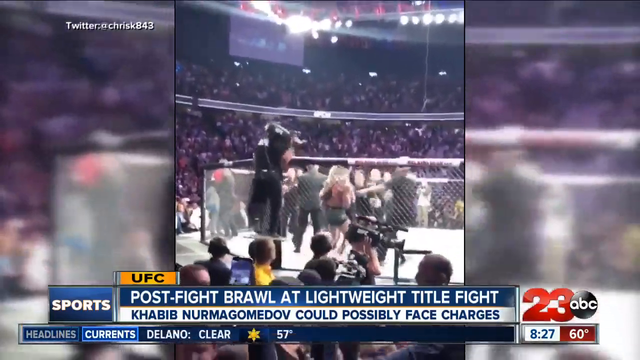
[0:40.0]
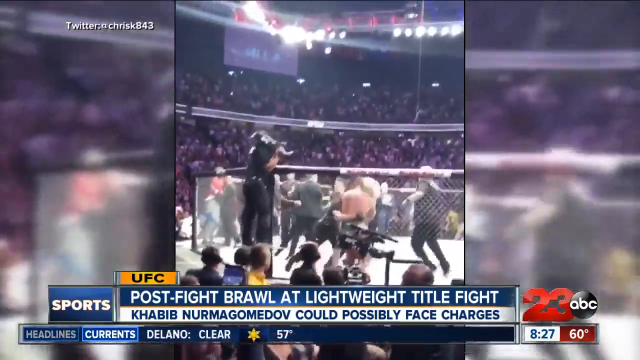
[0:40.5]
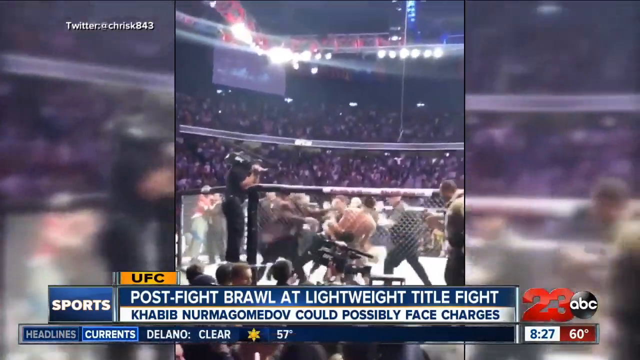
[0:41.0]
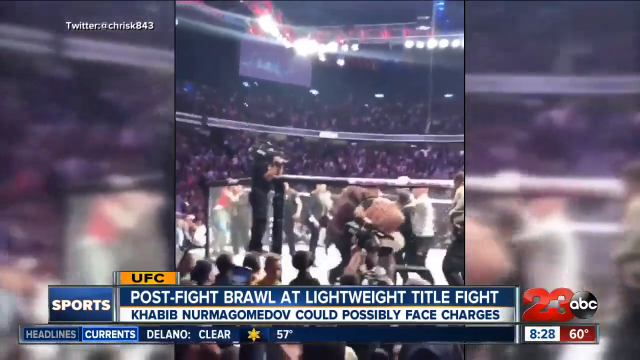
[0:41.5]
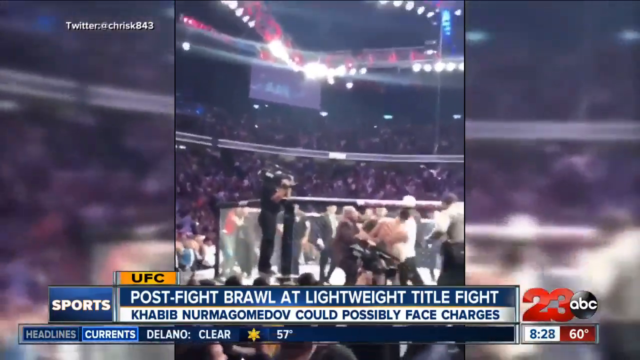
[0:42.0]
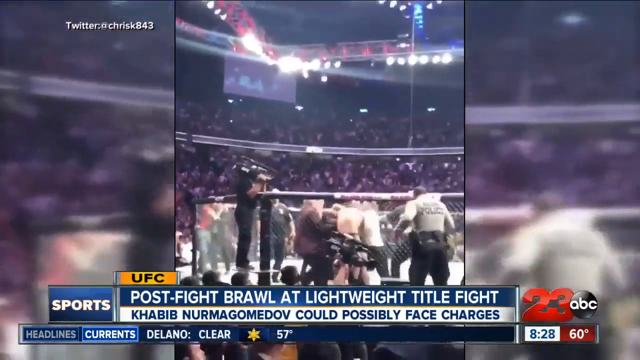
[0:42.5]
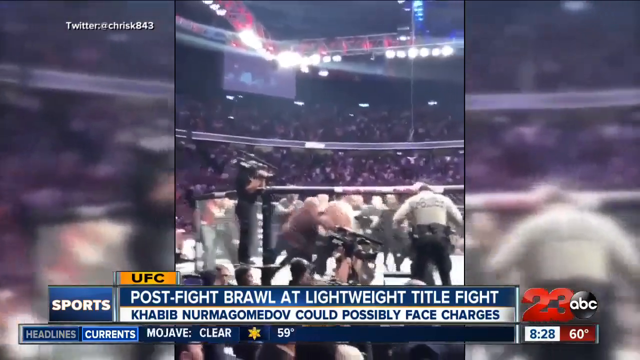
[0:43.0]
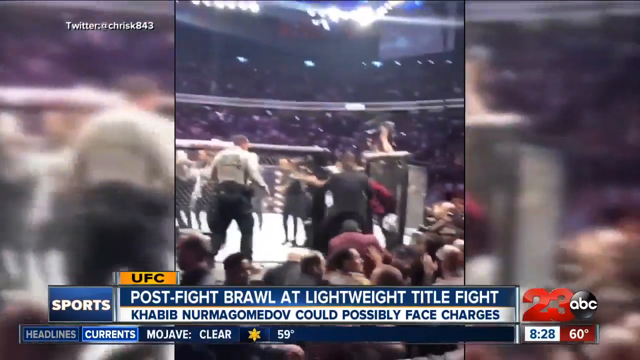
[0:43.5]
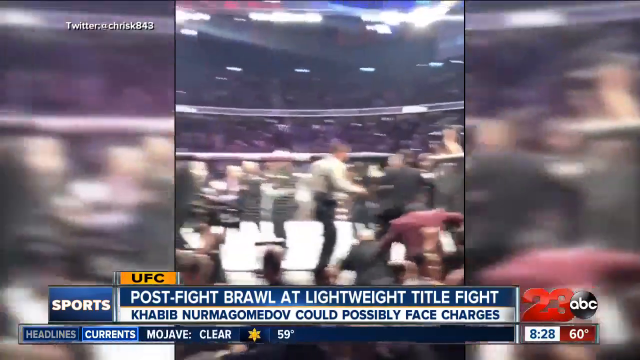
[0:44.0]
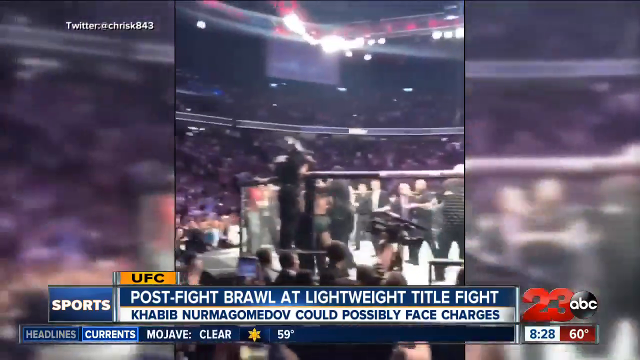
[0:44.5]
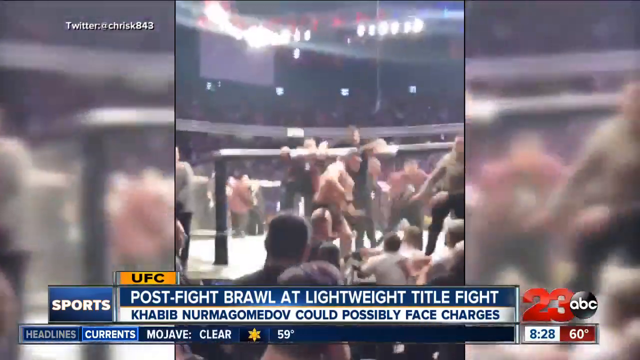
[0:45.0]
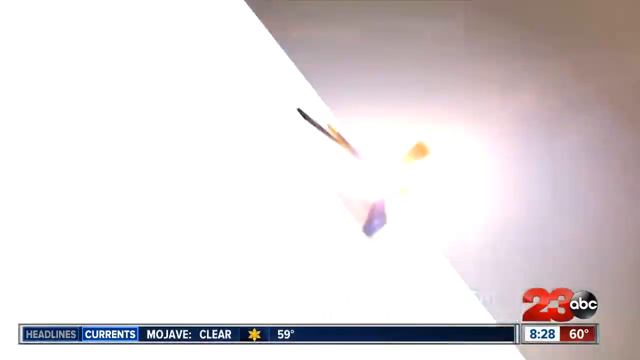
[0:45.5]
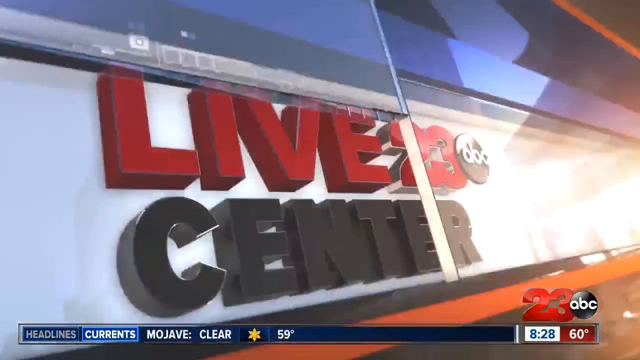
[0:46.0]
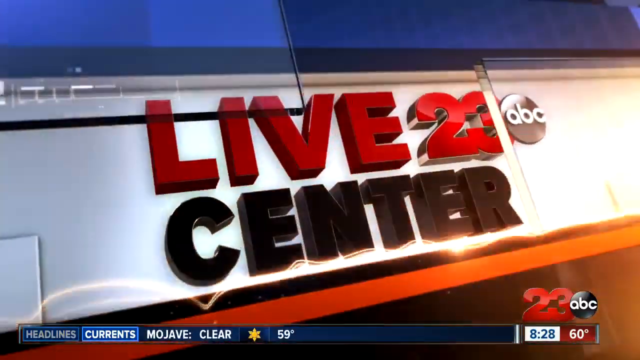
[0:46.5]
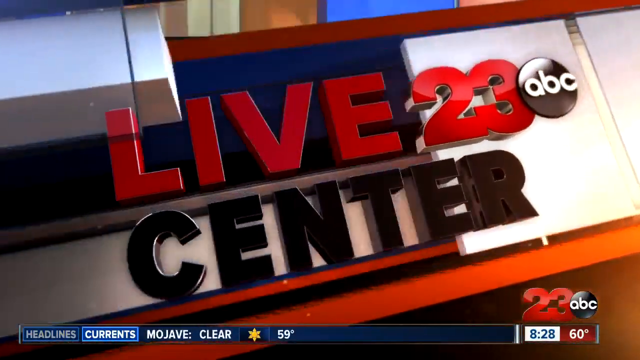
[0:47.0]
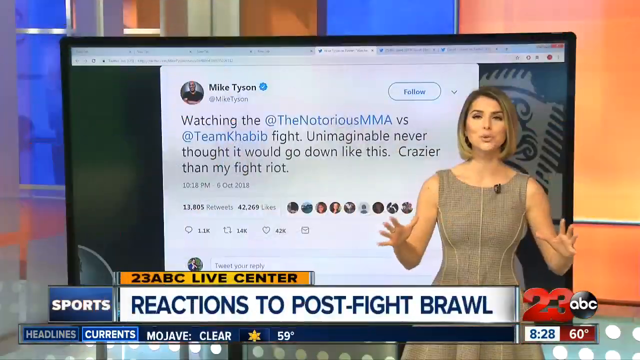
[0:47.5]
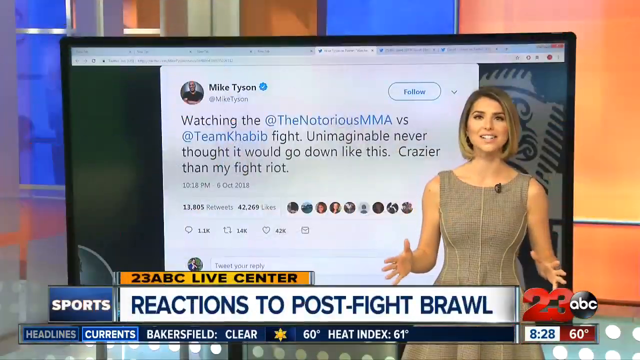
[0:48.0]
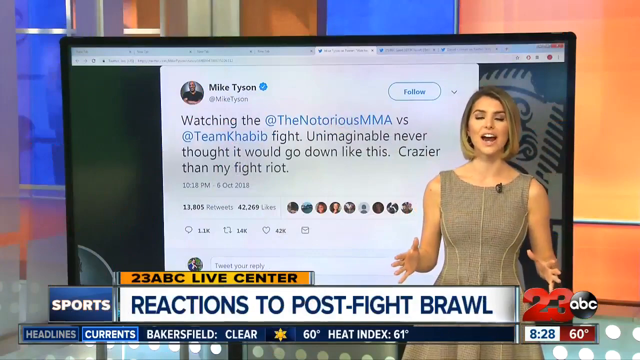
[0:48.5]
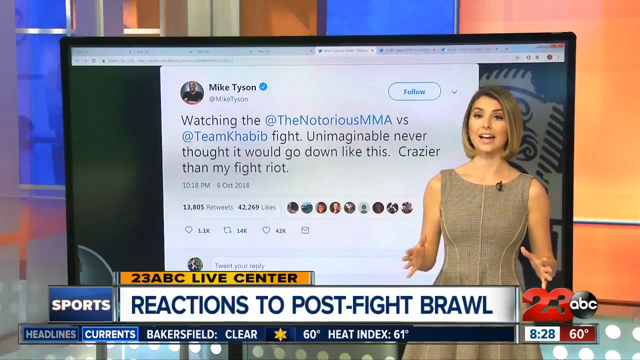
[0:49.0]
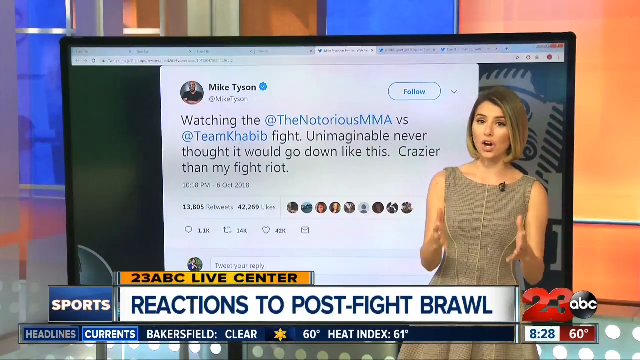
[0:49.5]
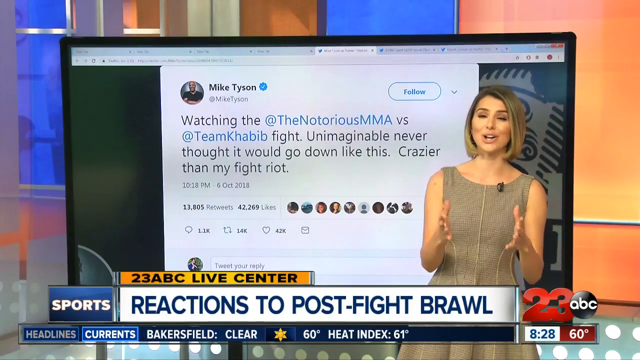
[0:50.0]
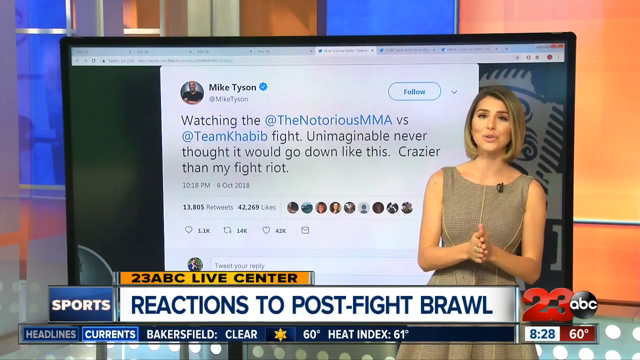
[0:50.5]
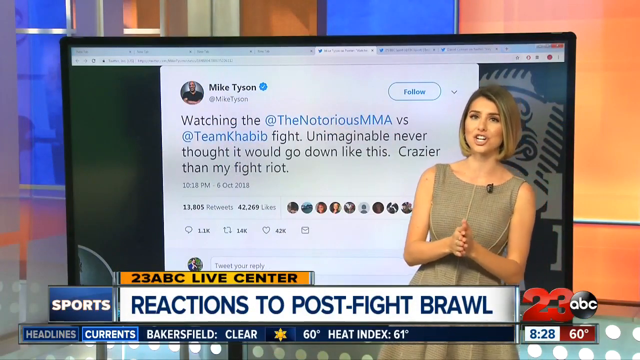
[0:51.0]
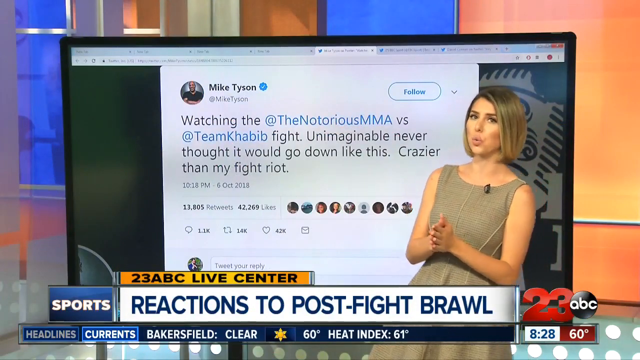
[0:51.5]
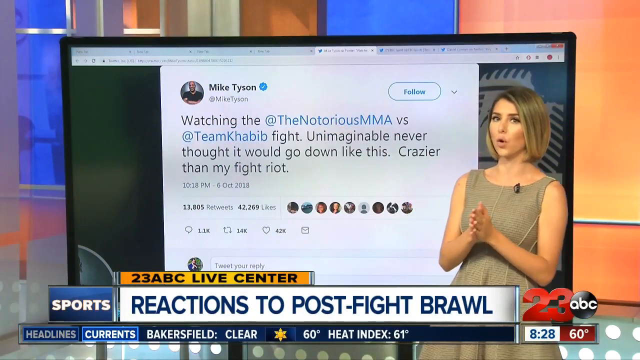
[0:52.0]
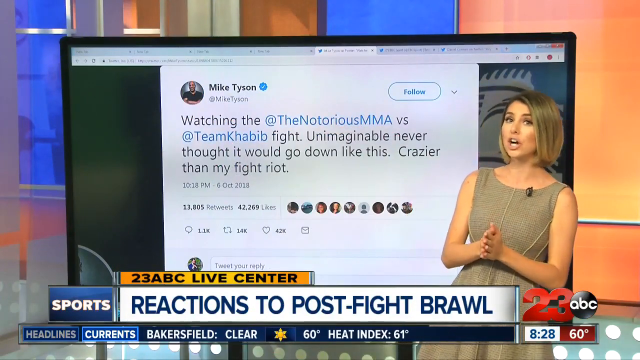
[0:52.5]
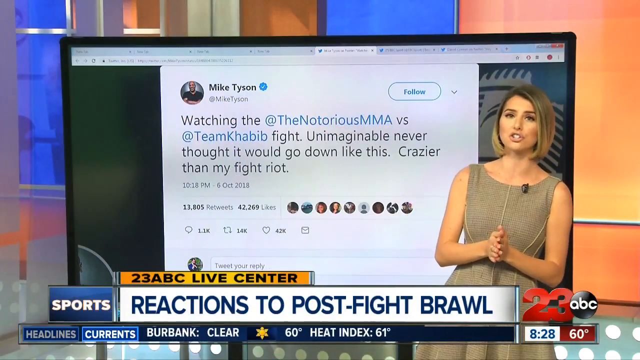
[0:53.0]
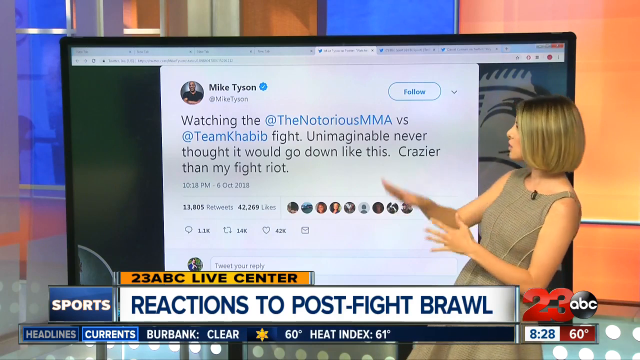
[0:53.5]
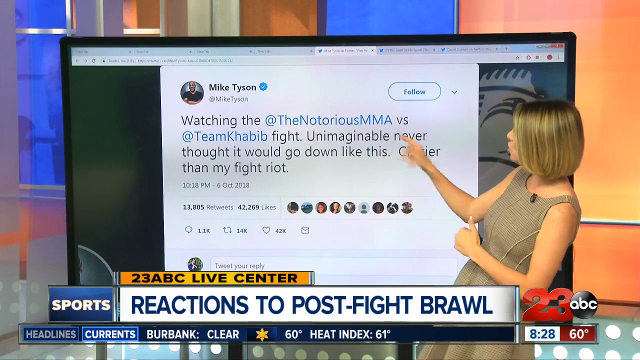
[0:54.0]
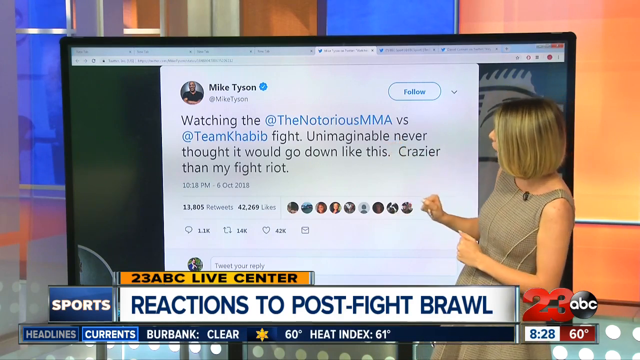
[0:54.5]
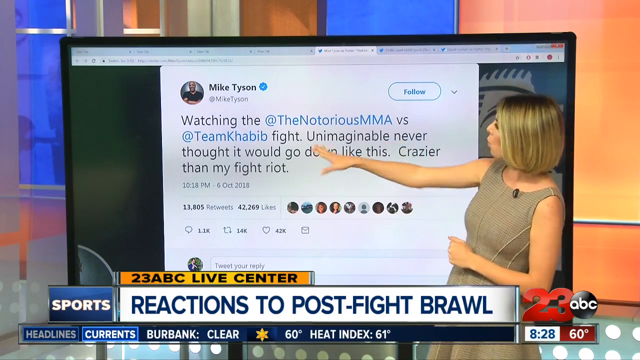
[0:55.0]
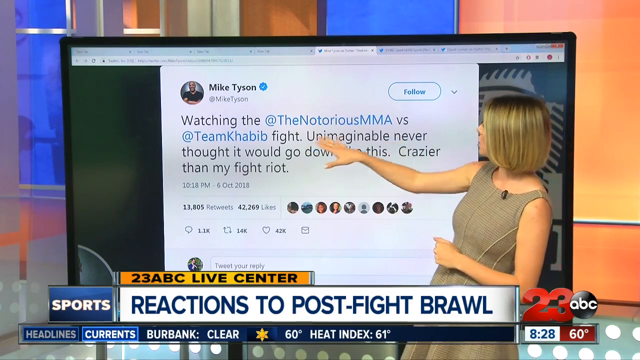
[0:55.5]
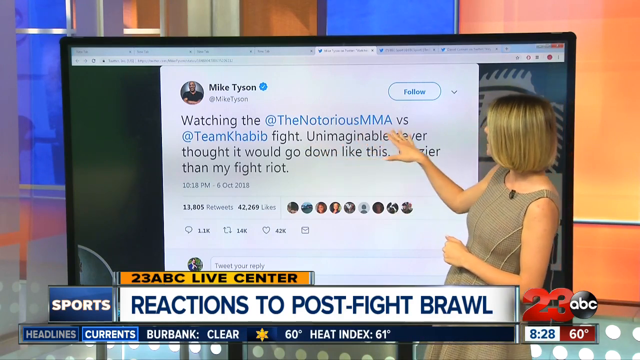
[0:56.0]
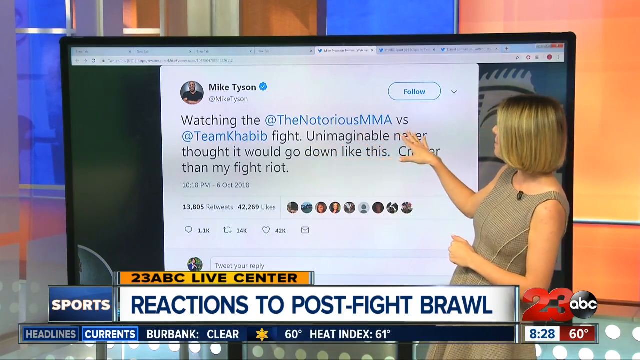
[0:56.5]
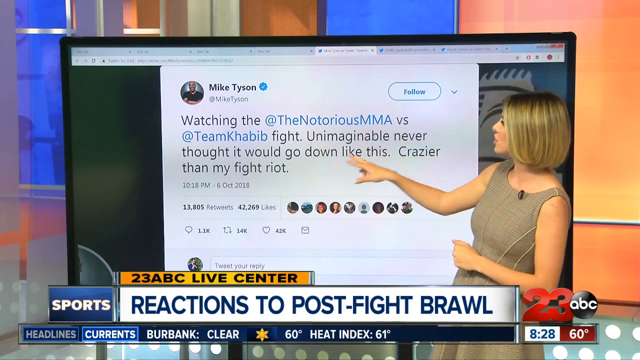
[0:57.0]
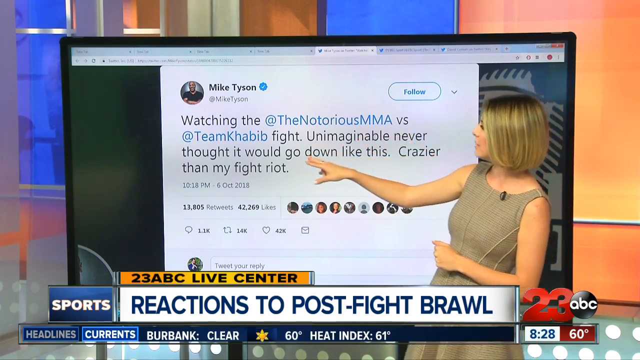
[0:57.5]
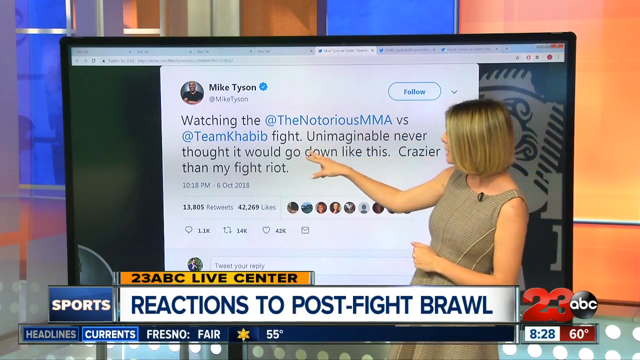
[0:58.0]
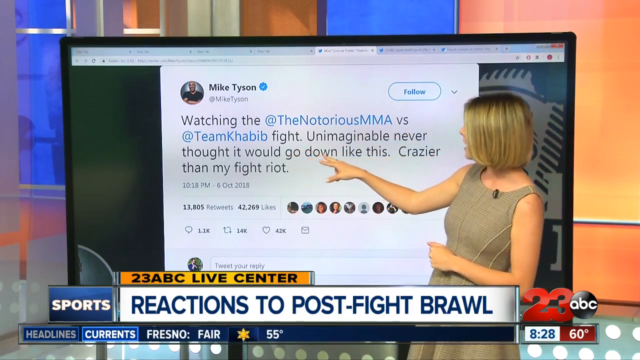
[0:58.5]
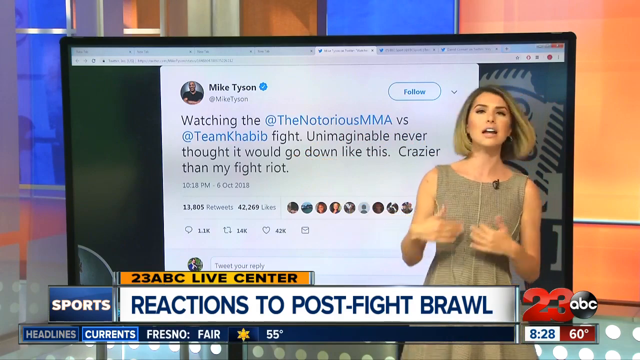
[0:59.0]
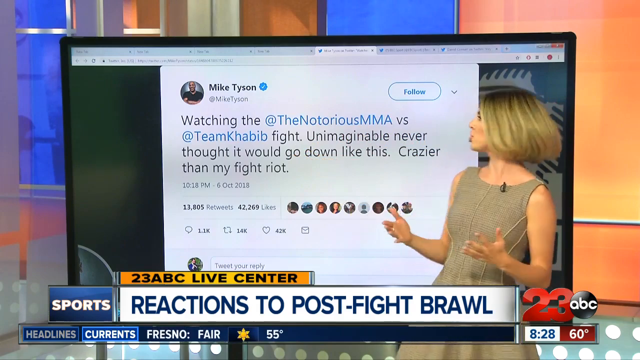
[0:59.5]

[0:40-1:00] A cameraman stands up; he is the one filming the scene. Fights continue to break out everywhere, with people jumping out of the ring and kicking. A "Live 23" ABC graphic appears. A woman in a grayish dress with a bob haircut speaks. A Twitter post attributed to Mike Tyson is shown, with a follow button, and a Twitter tag "ChrisK43" is at the top. At the bottom, current weather is shown for Burbank and Bakersfield.